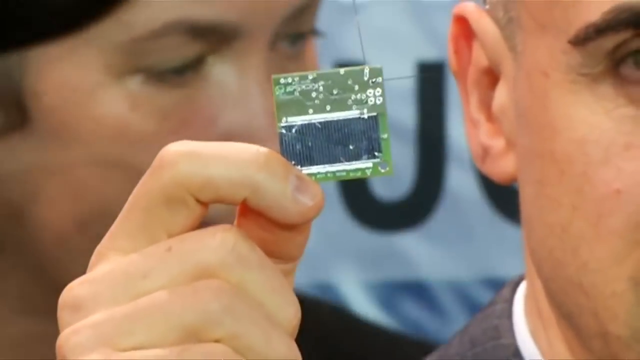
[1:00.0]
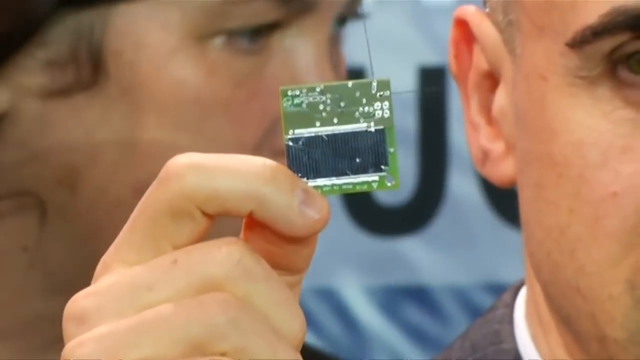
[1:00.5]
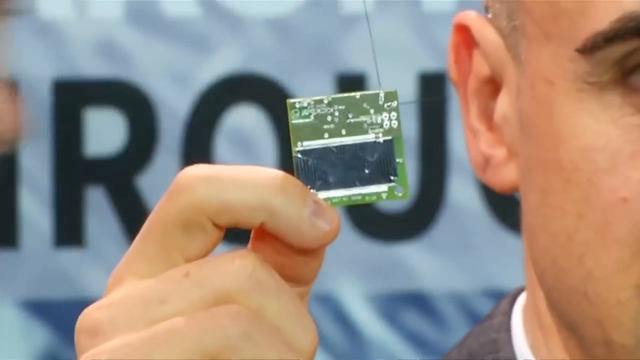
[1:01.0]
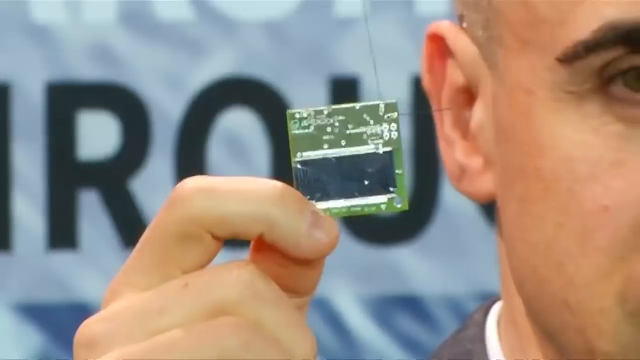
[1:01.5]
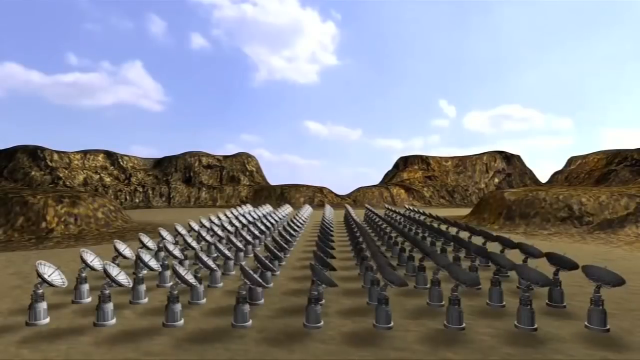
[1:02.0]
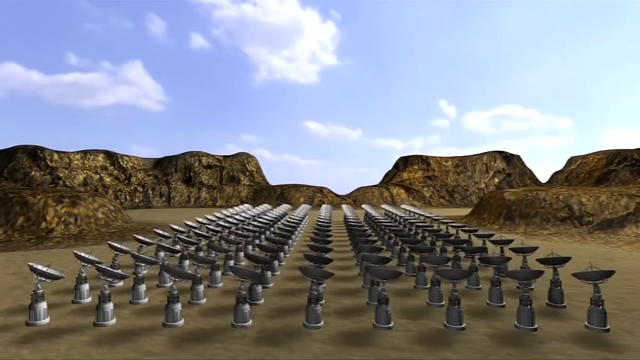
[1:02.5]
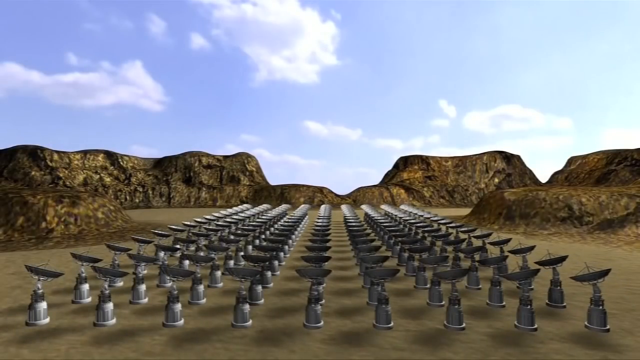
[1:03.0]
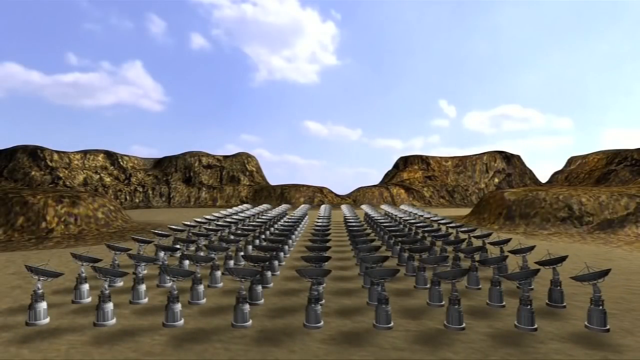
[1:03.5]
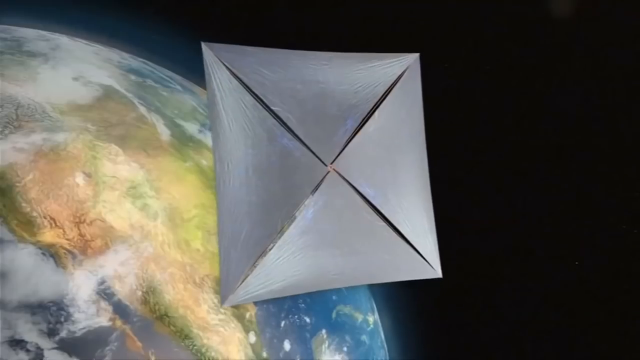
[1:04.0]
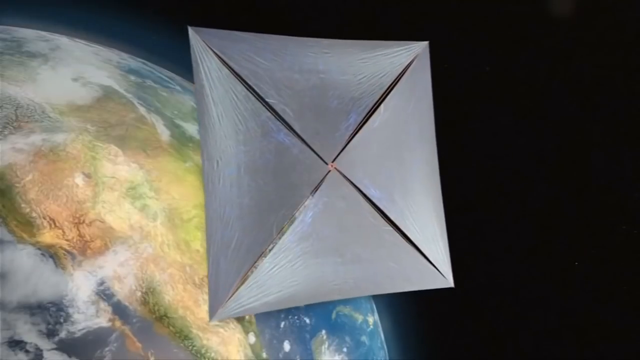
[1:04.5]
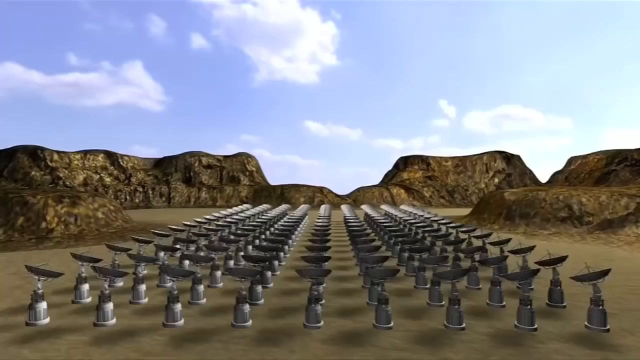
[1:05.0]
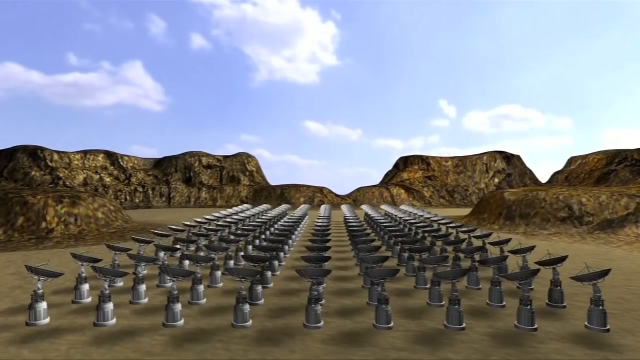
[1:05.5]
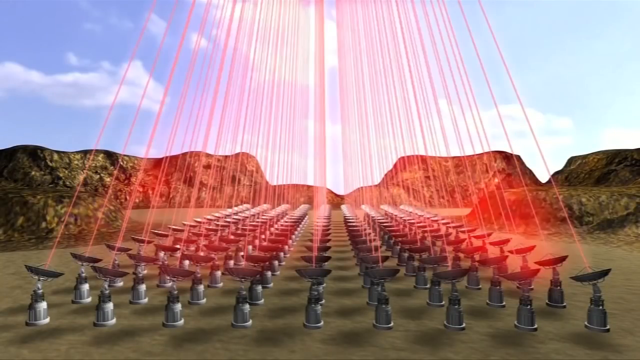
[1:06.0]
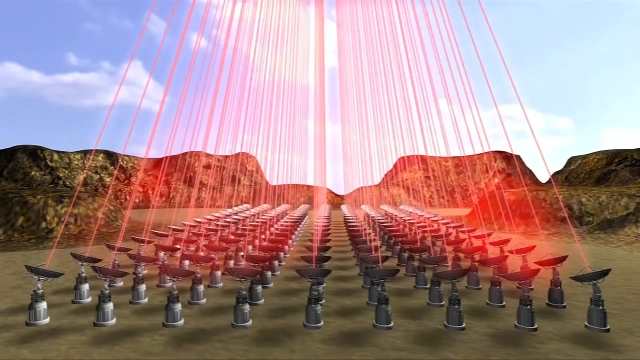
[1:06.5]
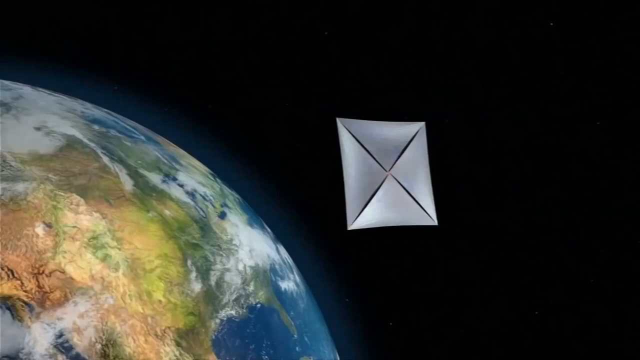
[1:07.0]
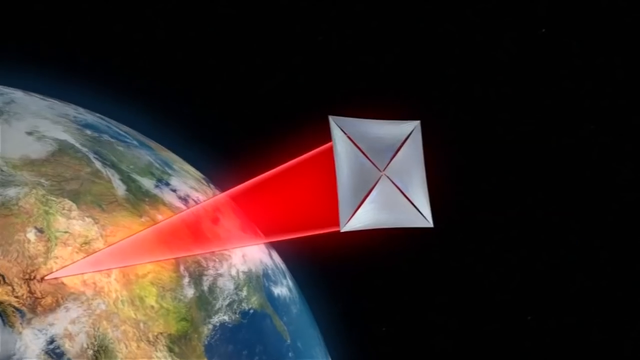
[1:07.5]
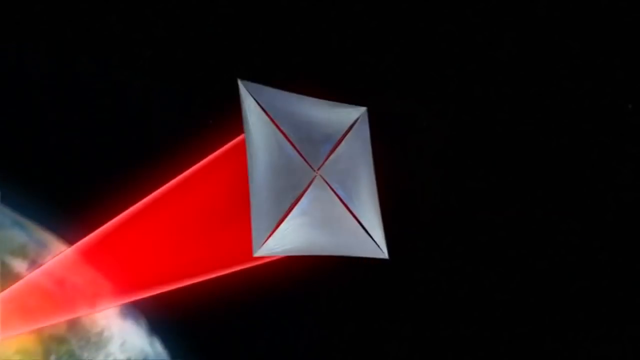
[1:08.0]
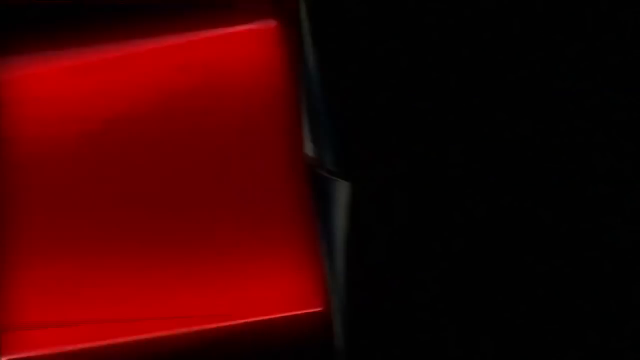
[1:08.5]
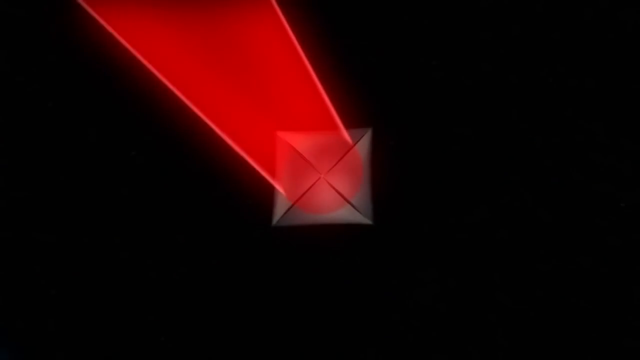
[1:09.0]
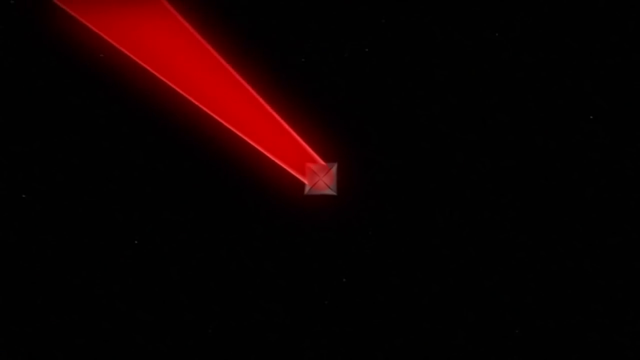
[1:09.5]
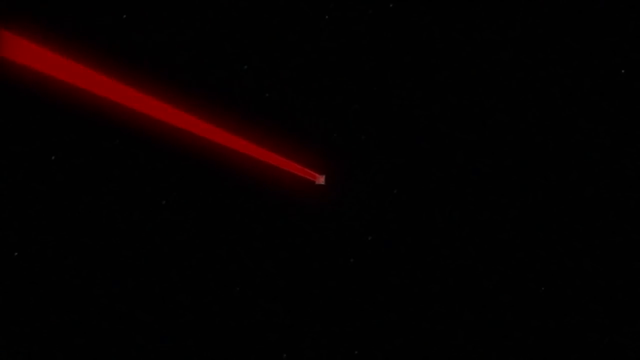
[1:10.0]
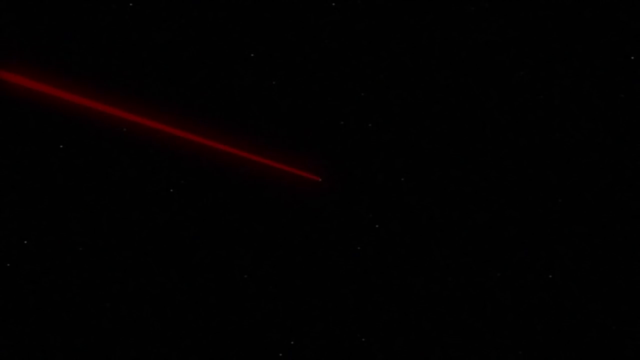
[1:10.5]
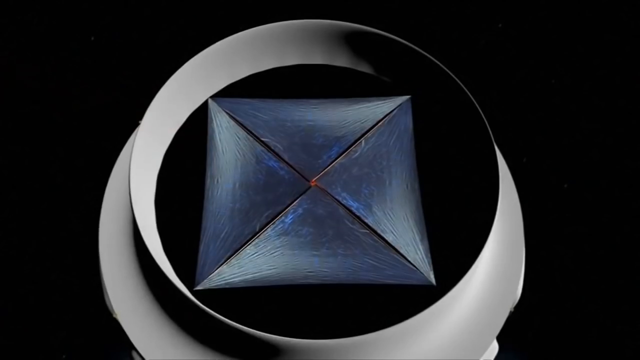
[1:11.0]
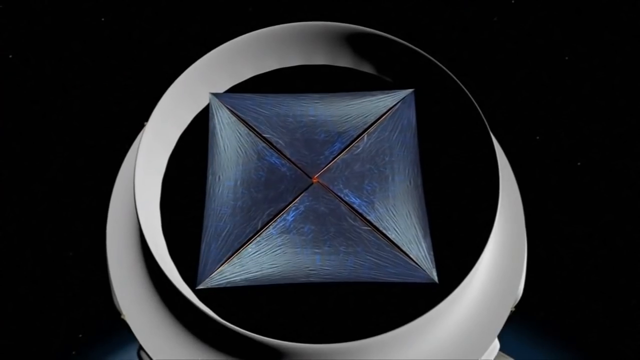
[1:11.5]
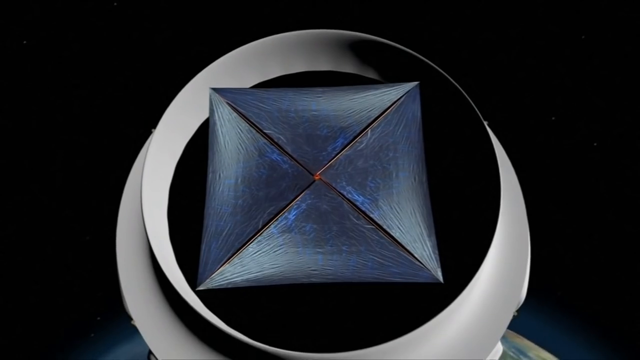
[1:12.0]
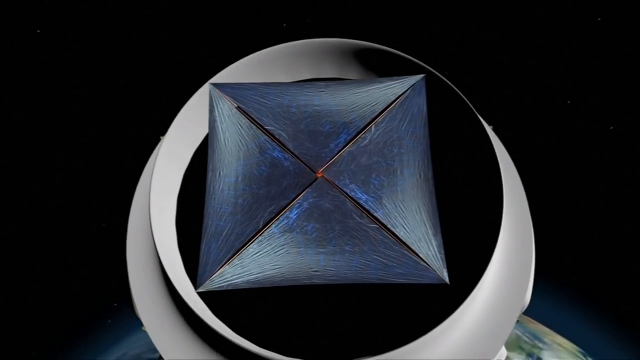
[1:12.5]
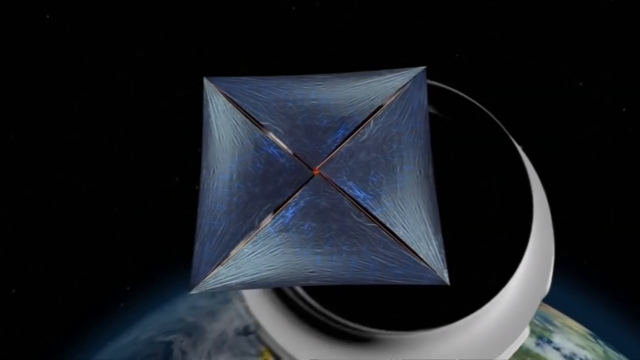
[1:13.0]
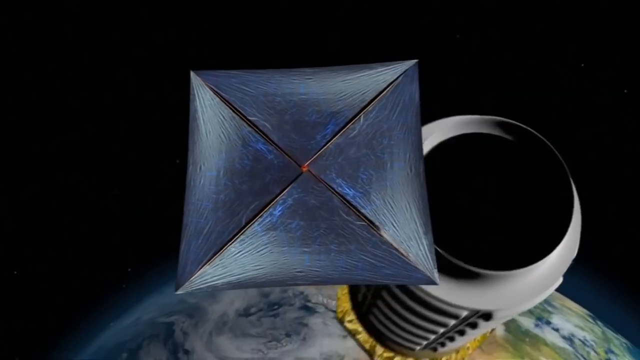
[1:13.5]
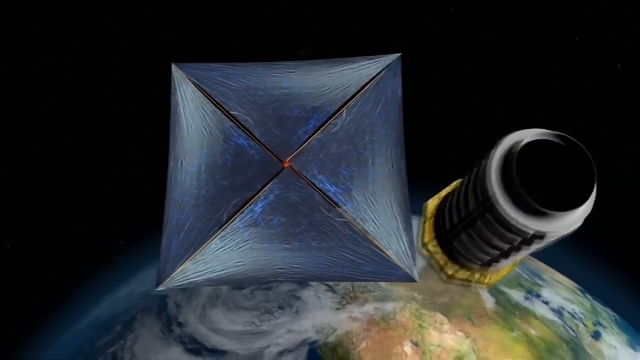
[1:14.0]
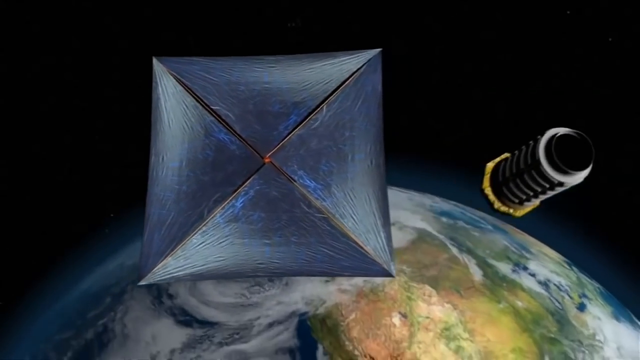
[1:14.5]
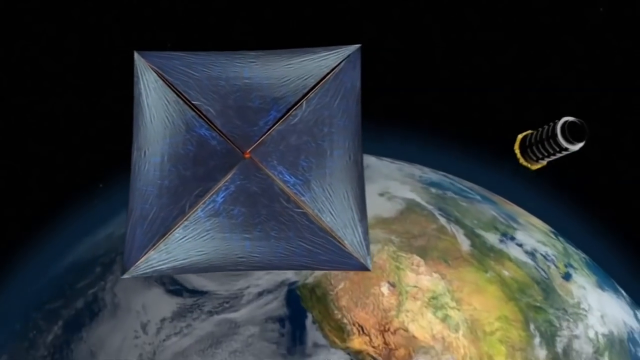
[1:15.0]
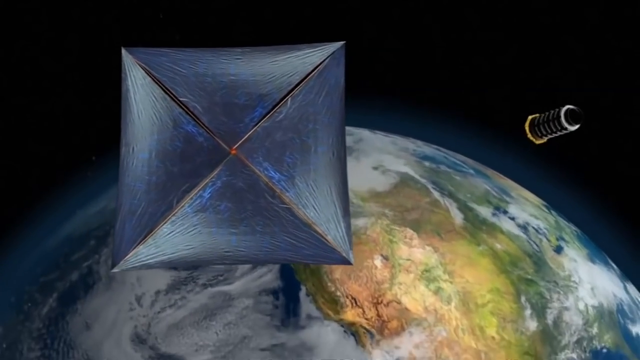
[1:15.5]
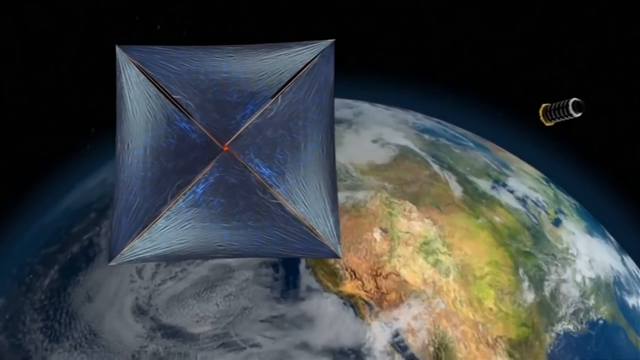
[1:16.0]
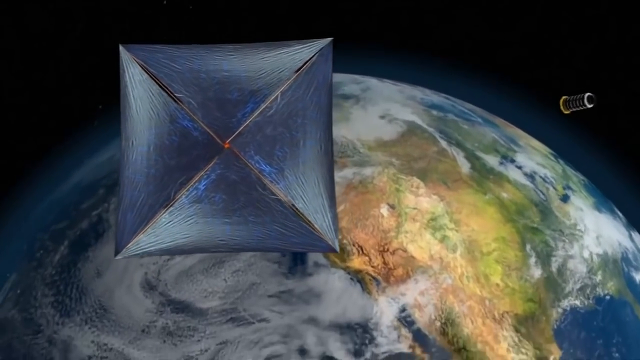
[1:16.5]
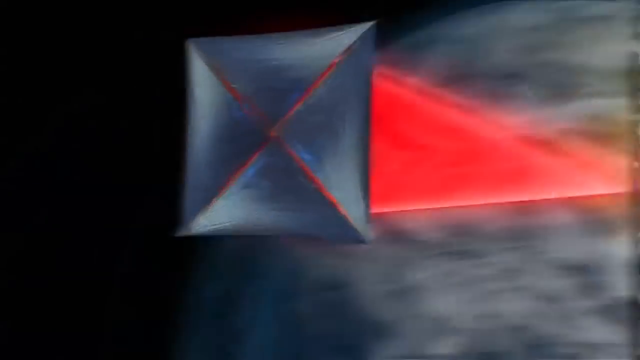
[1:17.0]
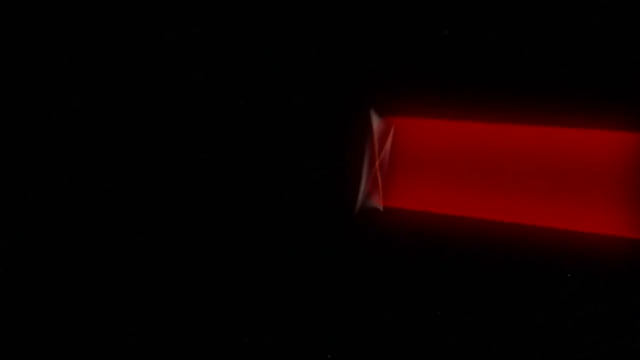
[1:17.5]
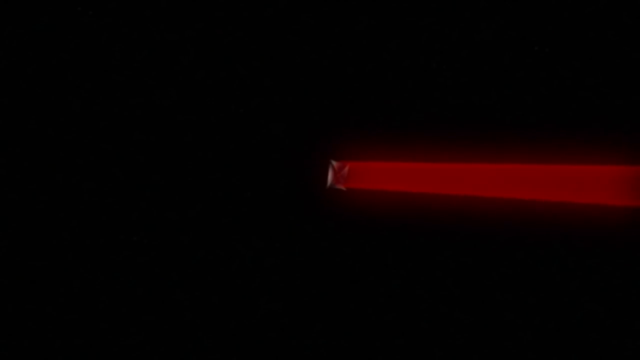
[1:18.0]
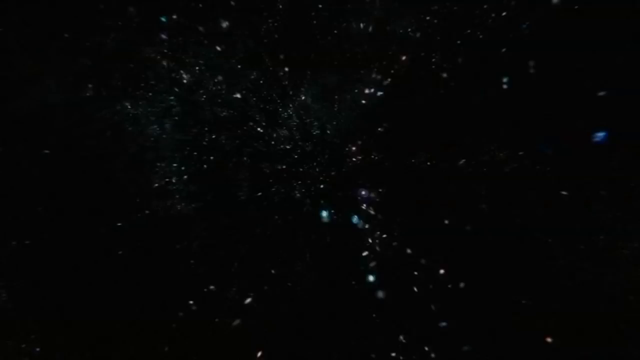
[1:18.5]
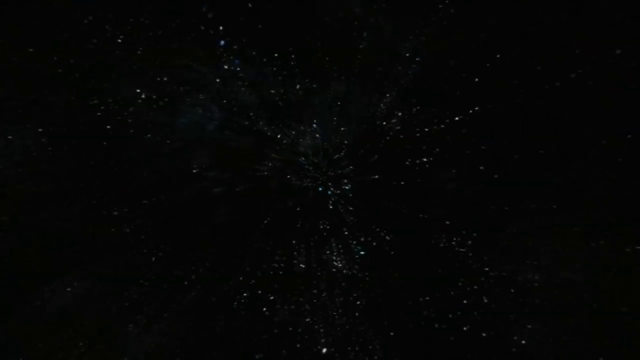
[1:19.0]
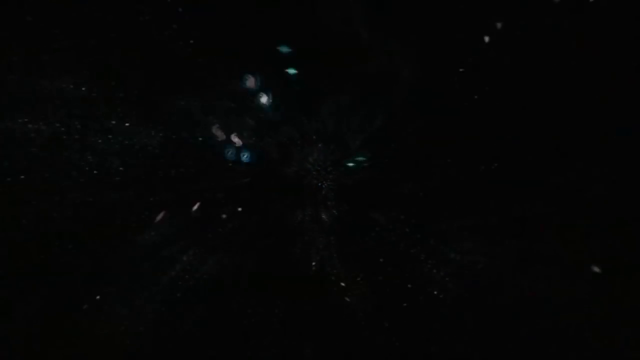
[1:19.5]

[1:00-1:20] A man holds a microchip, a small square chip with some black and metal on it; its purpose is unclear. The video then shows rows and rows of satellites pointing up towards the sky, and the metal square satellite object floating in the atmosphere with Earth below it. The satellites, all in rows in what looks like a mountainous desert, emit beams of red light that beam up into the sky in this demonstration, which looks computer animated rather than real. The red lights then hit the square satellite dish in the atmosphere, connecting it to the satellites on Earth through the beams, seemingly suggesting some sort of message is conveyed between the two pieces of equipment.